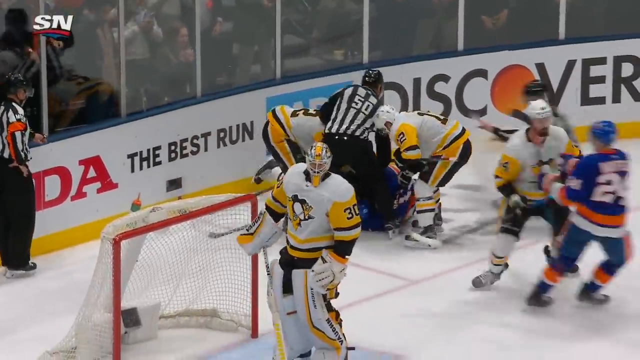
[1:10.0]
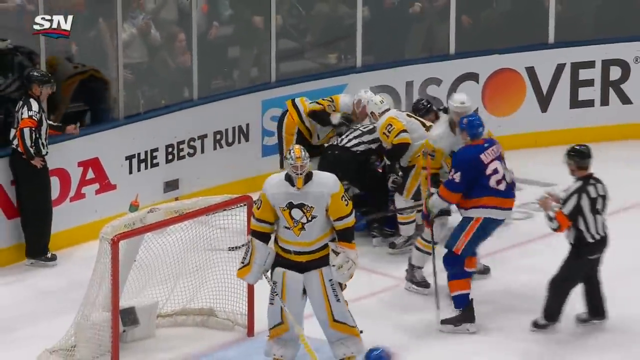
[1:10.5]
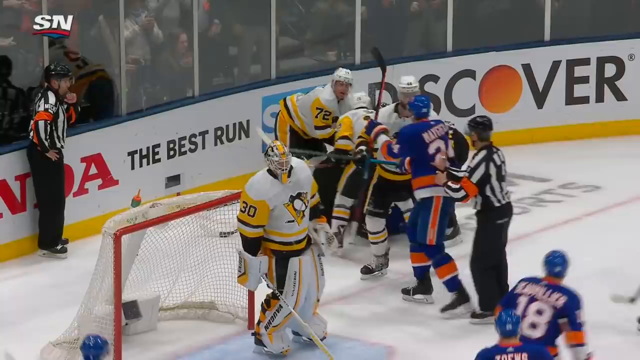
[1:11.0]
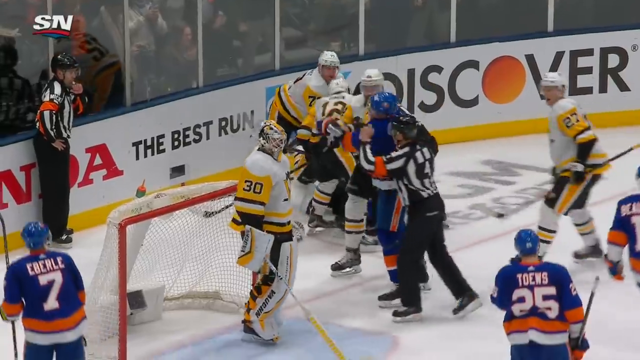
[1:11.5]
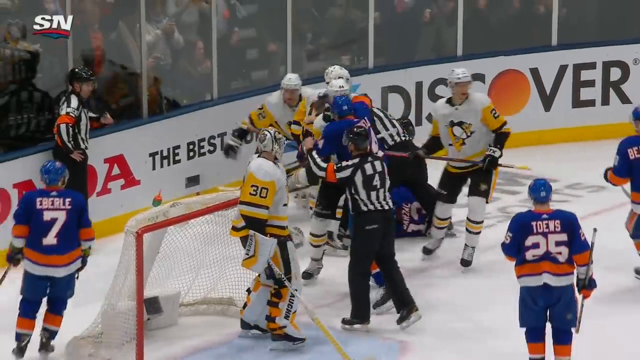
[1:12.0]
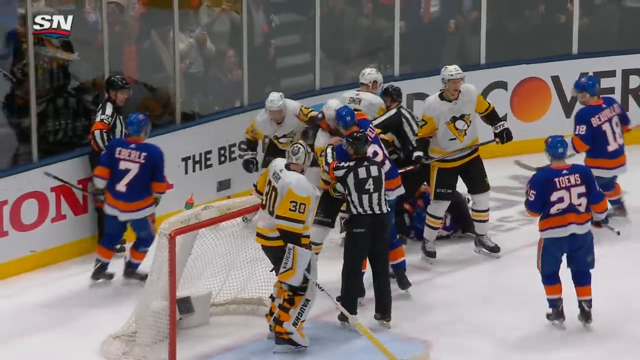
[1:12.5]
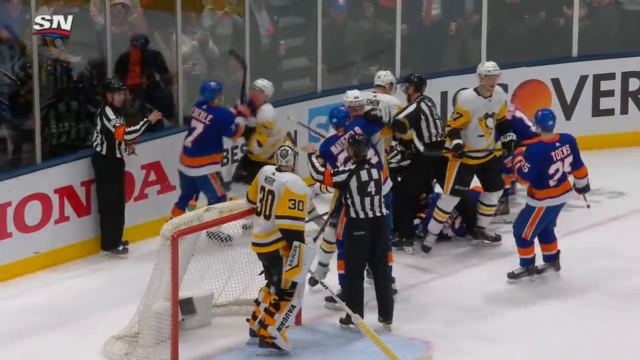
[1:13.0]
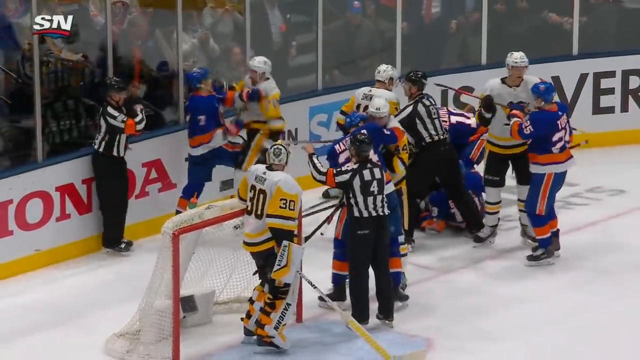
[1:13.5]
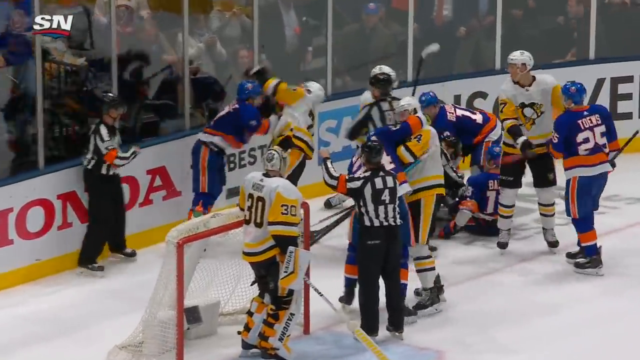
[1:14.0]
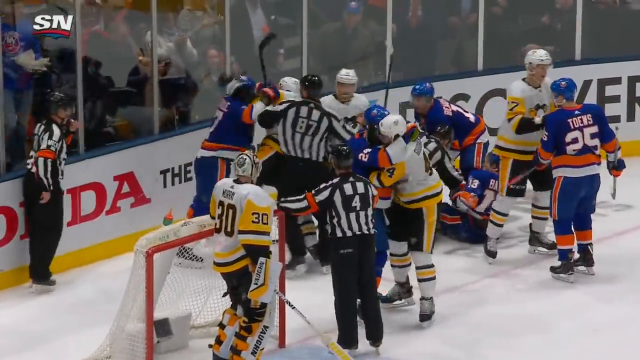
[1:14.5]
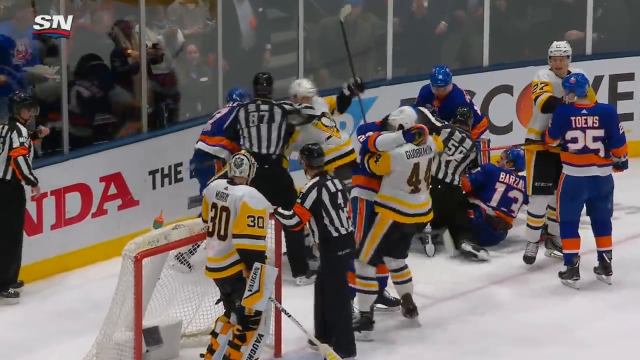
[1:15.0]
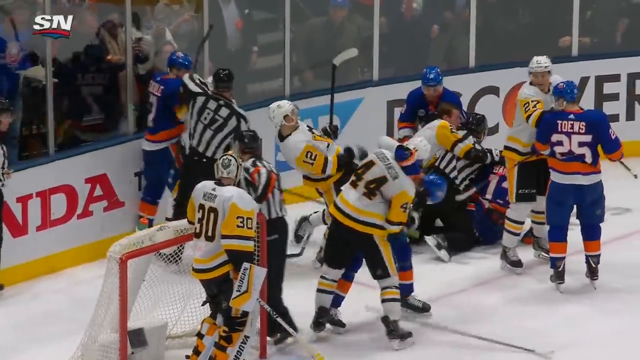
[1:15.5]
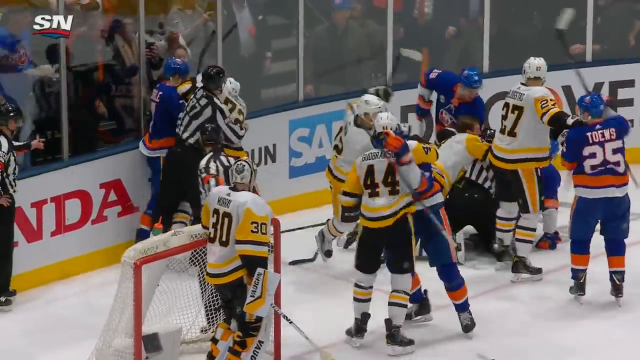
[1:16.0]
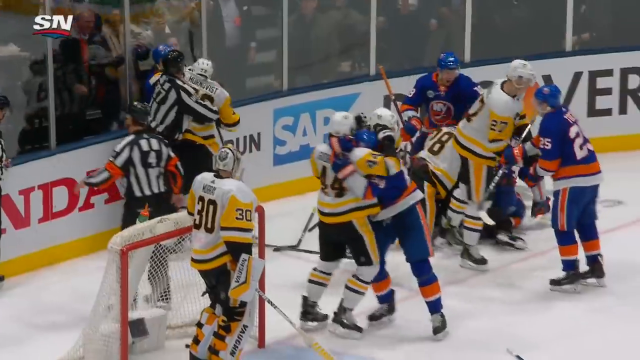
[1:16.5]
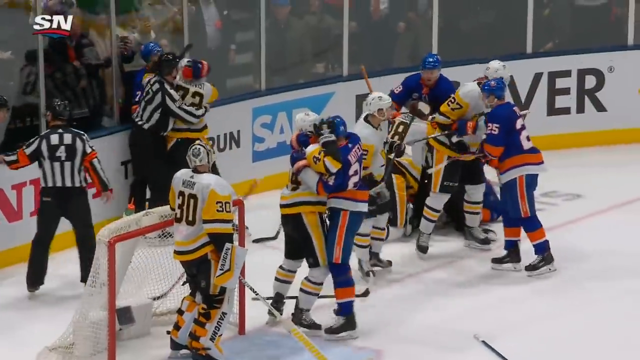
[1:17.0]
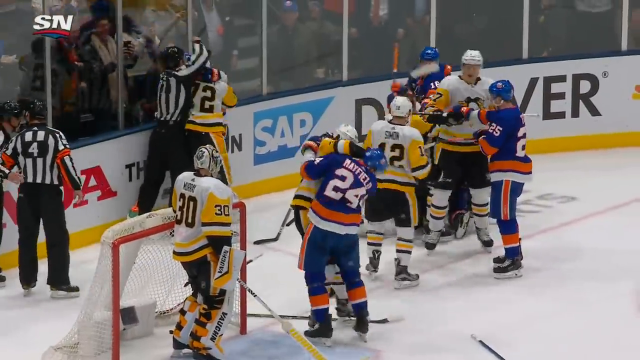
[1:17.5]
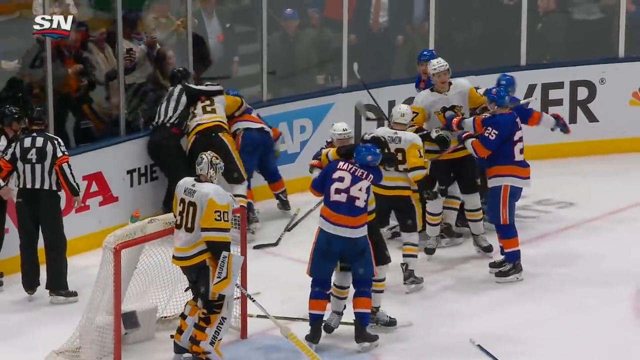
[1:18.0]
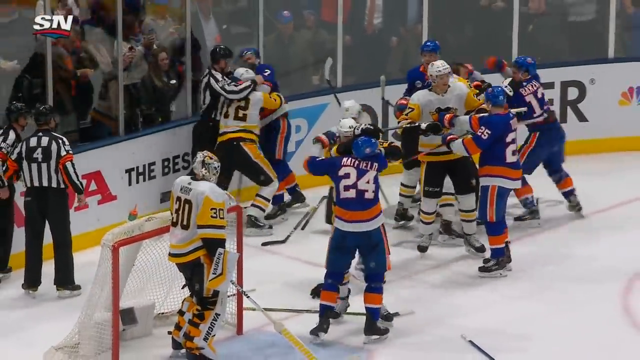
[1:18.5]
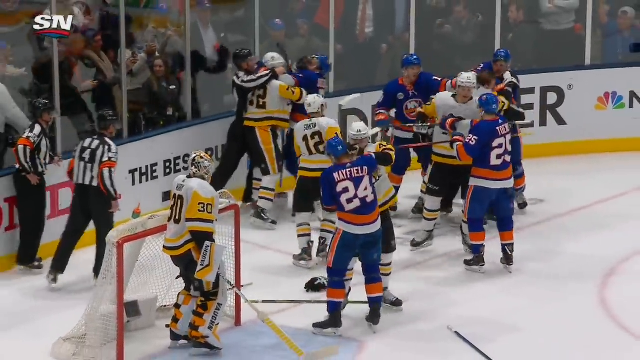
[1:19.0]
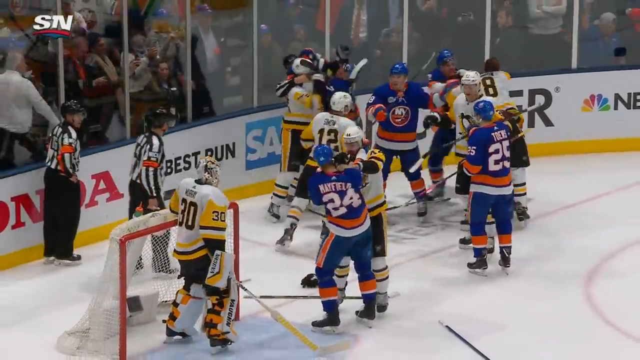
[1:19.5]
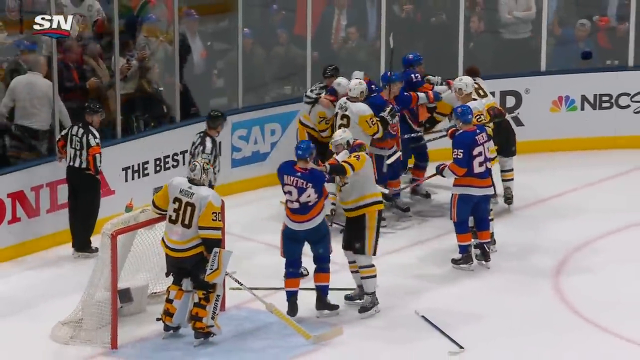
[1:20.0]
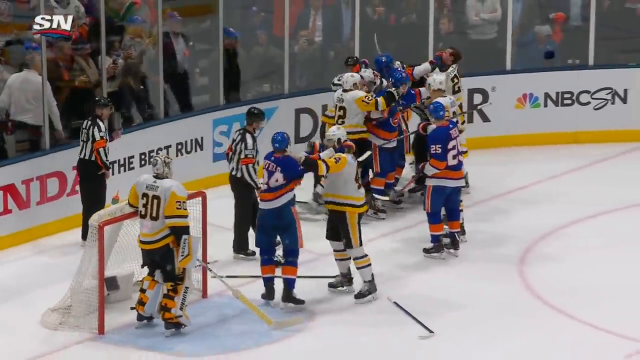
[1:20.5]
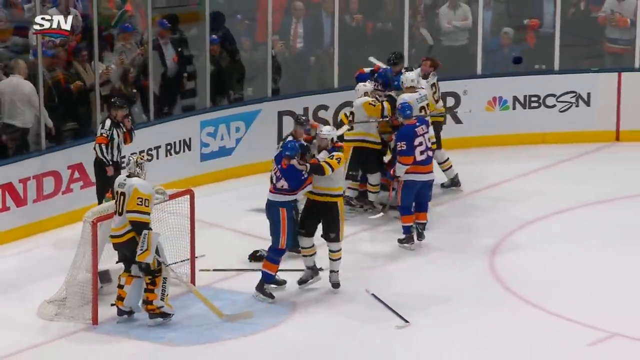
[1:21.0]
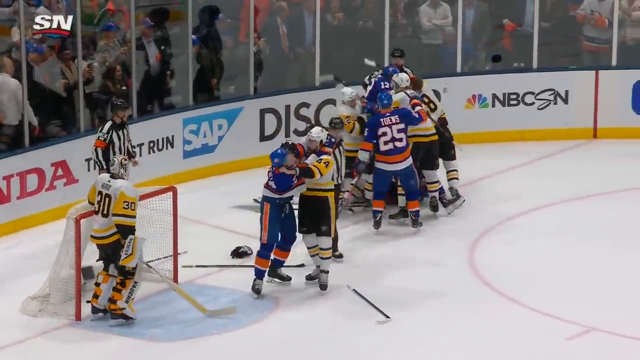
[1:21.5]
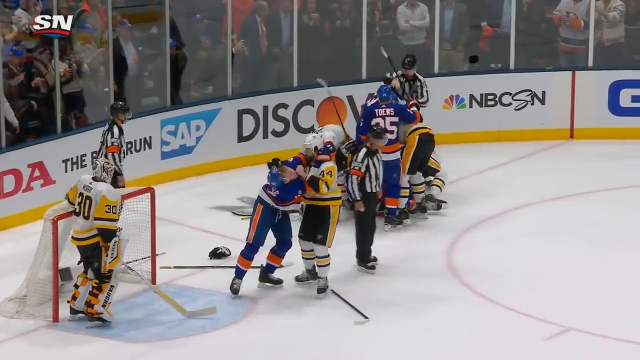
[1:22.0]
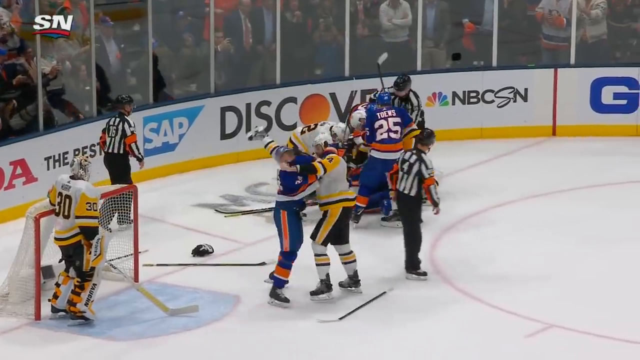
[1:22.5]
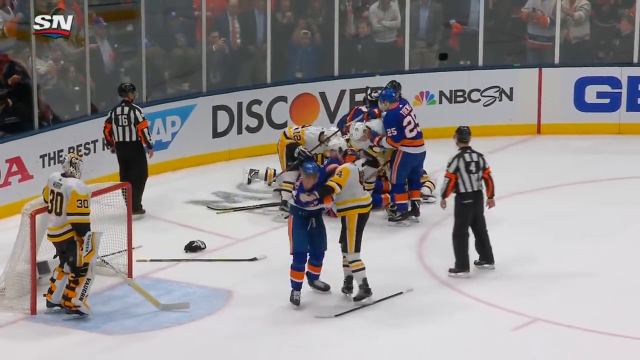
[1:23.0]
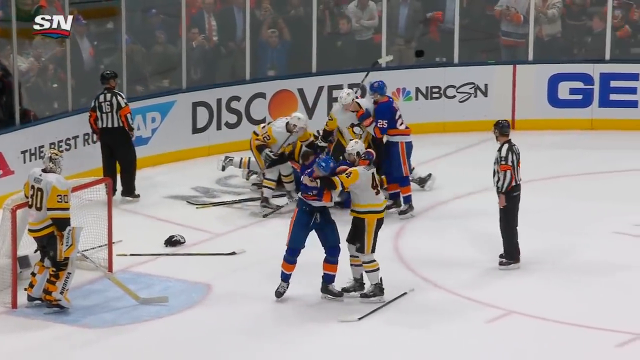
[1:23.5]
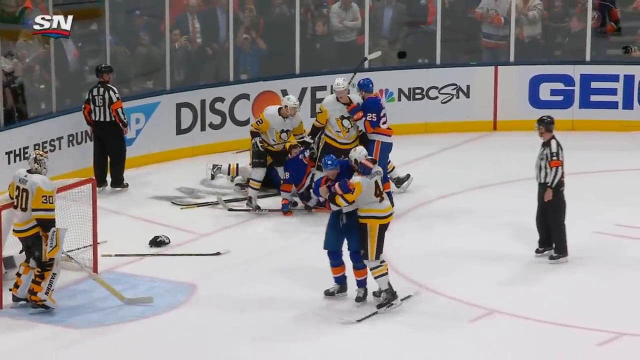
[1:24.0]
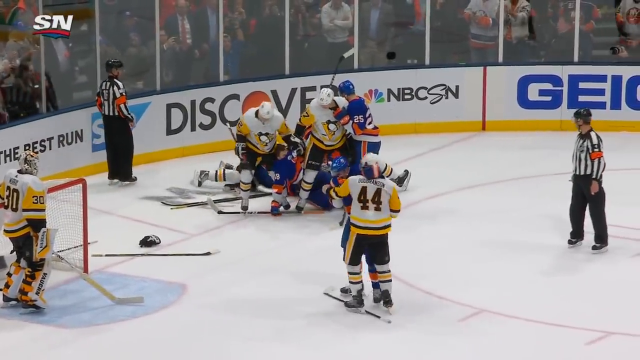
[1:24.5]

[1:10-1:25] A large brawl takes place at the end of the ice rink, with players from the New York Islanders and Pittsburgh Penguins once again fighting. Everyone is shoving each other. A couple of players are on the ground punching each other, while the others are standing and hand-fighting, grabbing each other's shoulders and shoulder pads and swinging at each other with their helmets still on. Fans go crazy, banging on the glass in the background around the ice rink. One referee stands off to the side, another tries to separate the fight, and another skates off. The sponsors on the wall around the ice rink read "Honda", "The Best Run", "SAP", "Discover", "WeatherTech" and "NBC Sports Network".